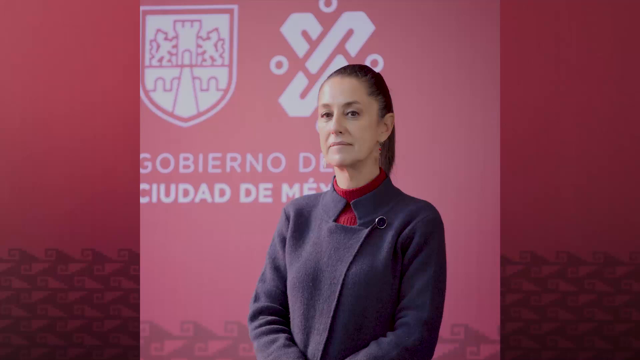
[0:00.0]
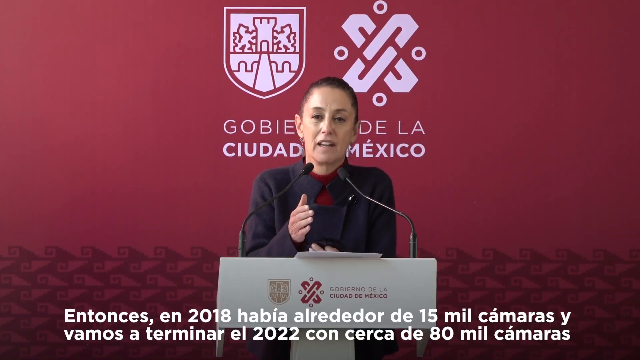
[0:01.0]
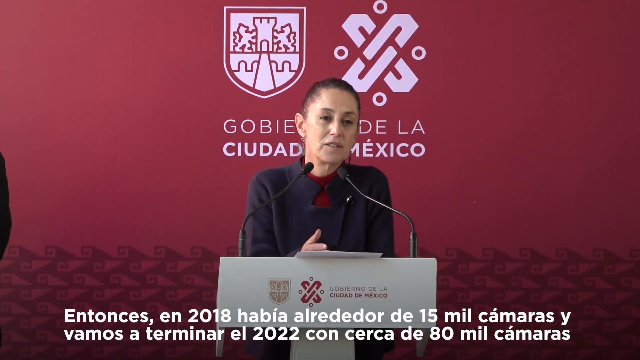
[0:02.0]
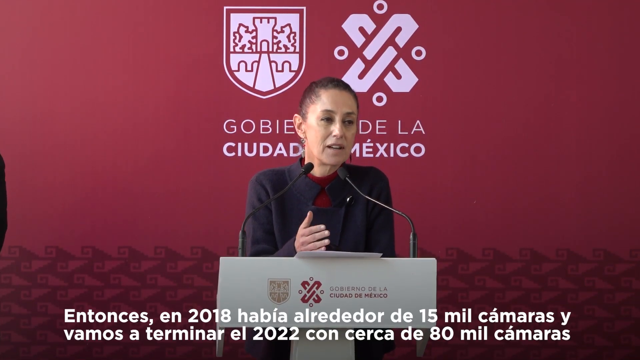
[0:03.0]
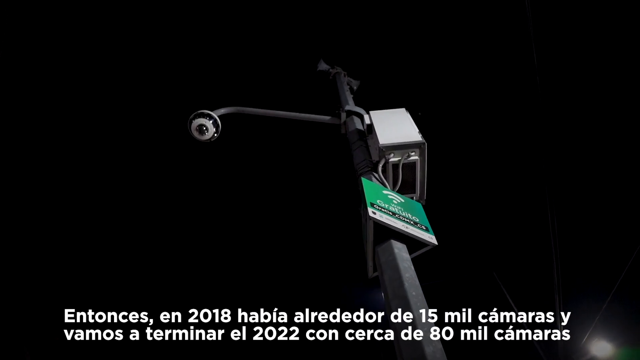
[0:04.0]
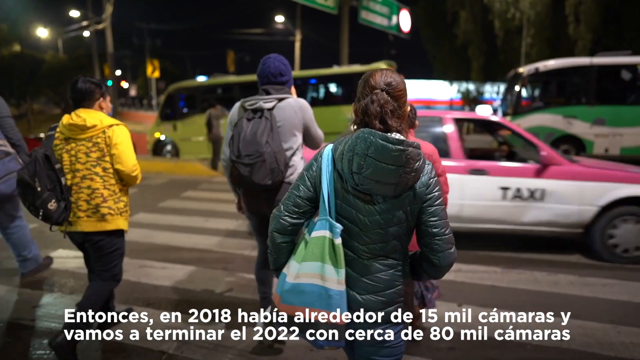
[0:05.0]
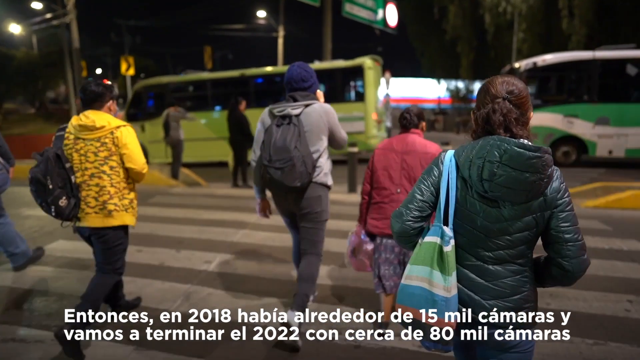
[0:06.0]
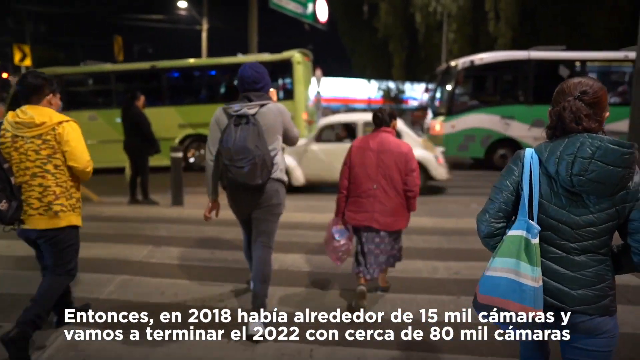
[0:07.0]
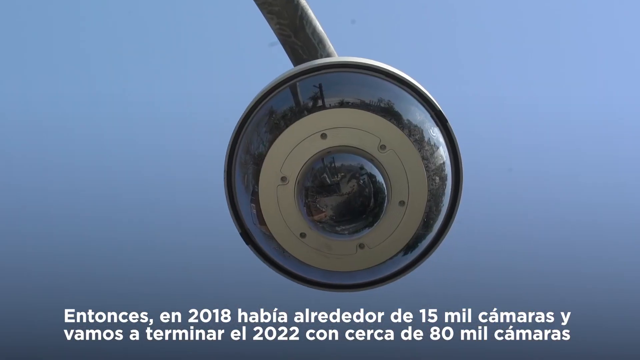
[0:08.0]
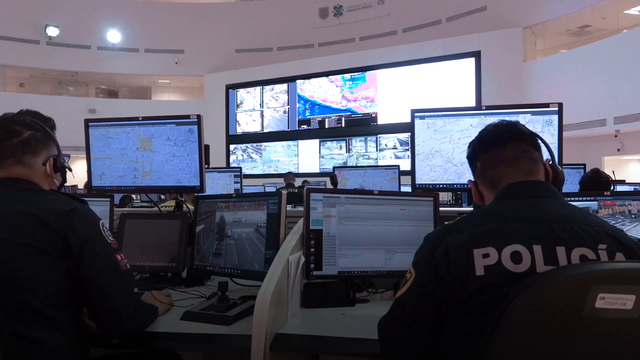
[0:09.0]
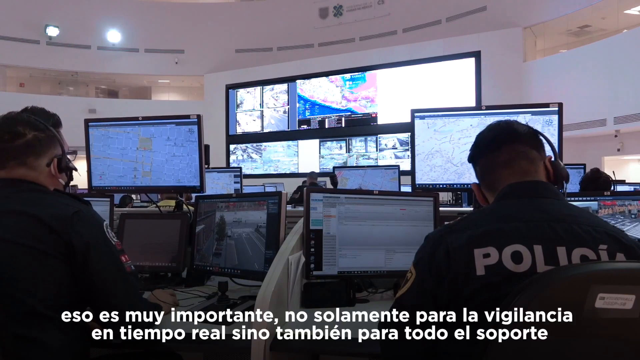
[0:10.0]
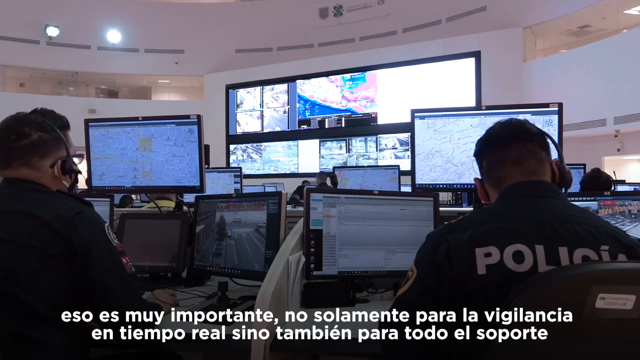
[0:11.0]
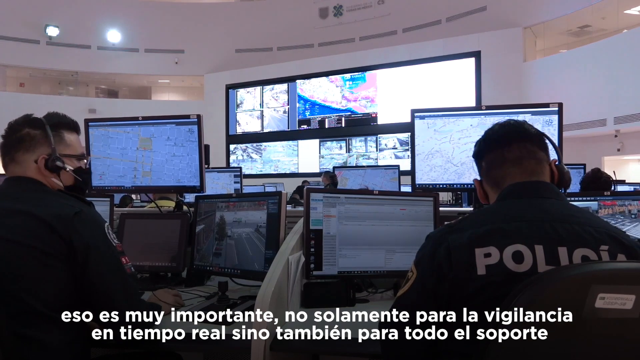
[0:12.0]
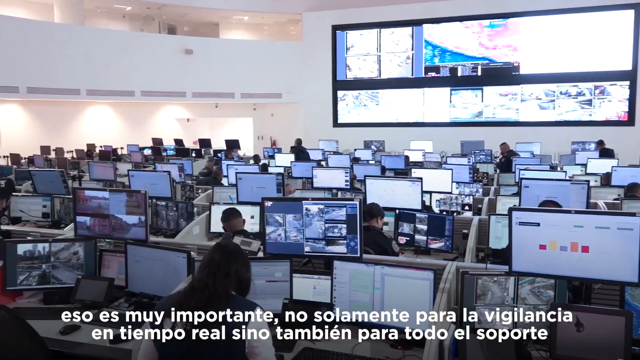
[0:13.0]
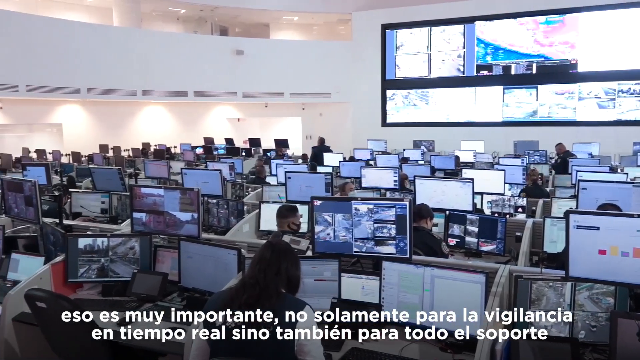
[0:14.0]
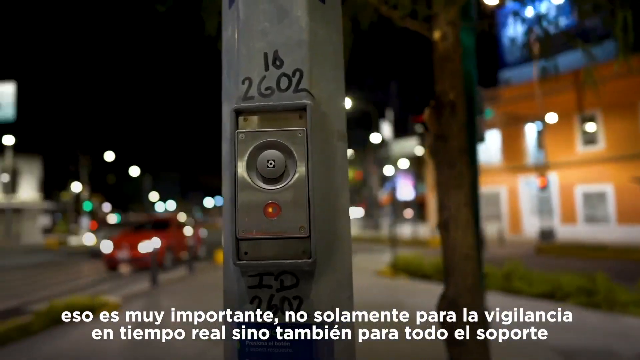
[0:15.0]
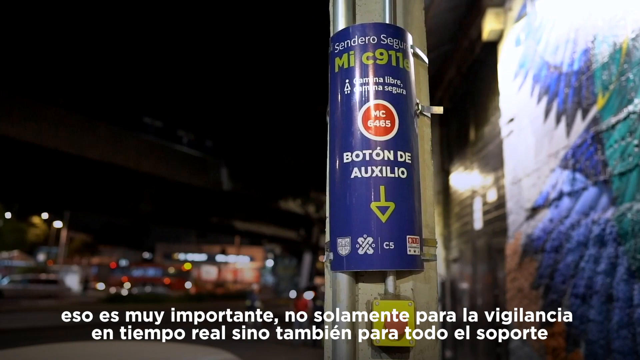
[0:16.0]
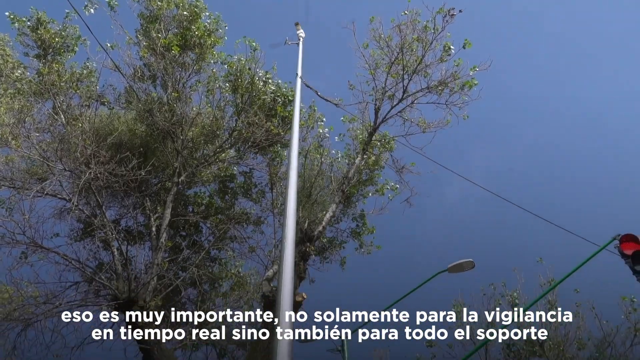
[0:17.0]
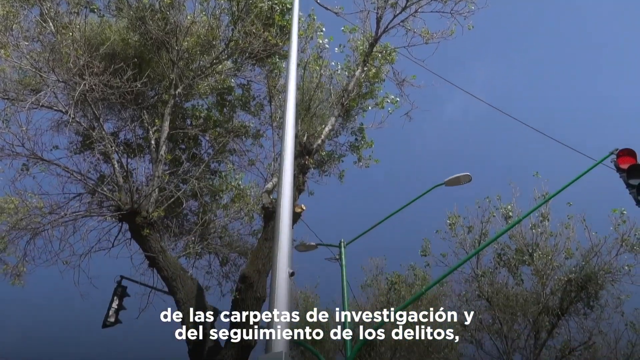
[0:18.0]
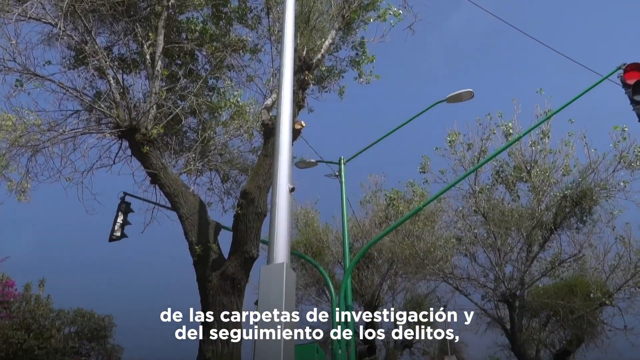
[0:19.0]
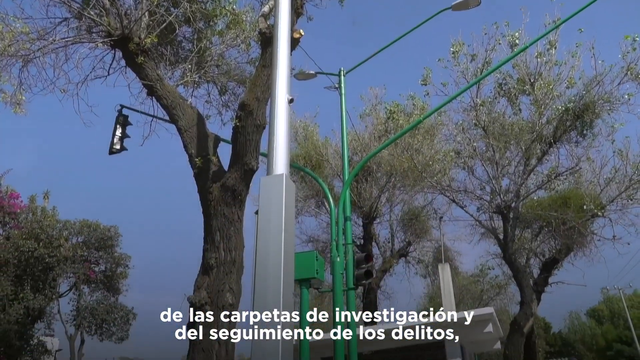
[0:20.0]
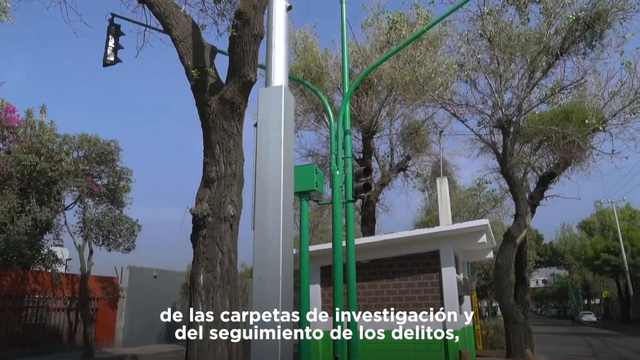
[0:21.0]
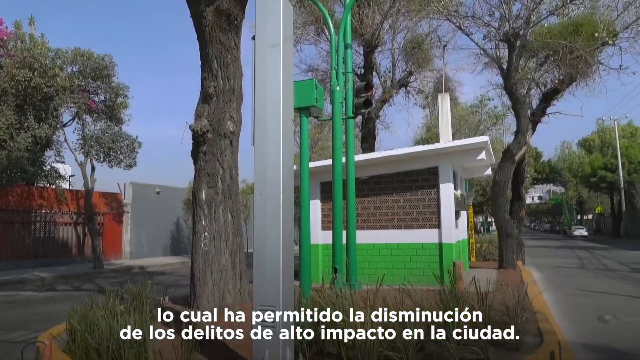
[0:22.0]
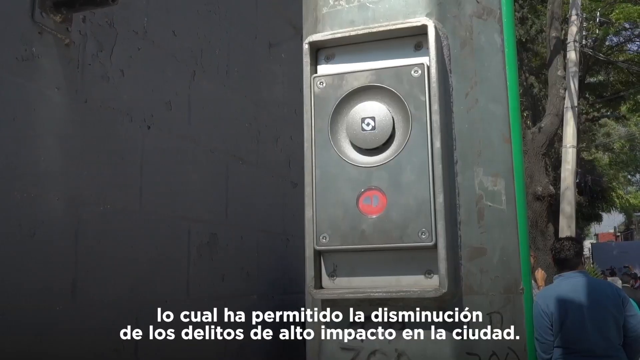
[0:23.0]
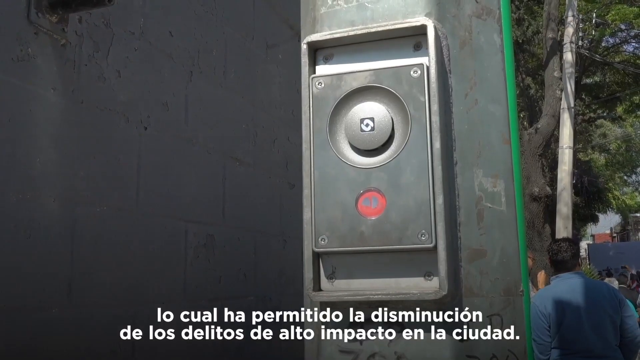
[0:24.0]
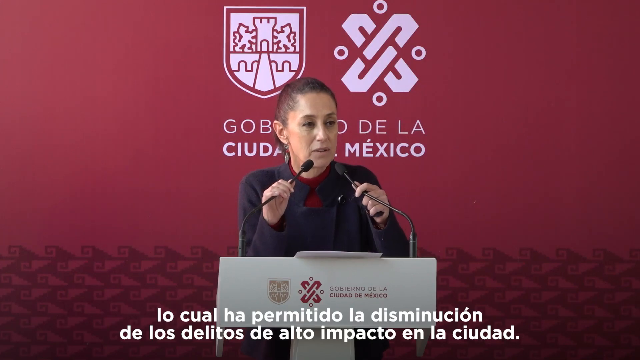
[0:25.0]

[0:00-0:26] The scene is in Policia, in what looks like an emergency room headquarters, possibly the Police Investigation Center. People sit in chairs in front of monitors, apparently watching feeds from street cameras posted all around the city; there appear to be cameras on light posts and cameras embedded throughout the city, and the monitors show many camera angles. A press conference seems to be taking place, apparently about some new equipment being rolled out. There appear to be some boots that may have emergency buttons that can be pressed in a dire situation.